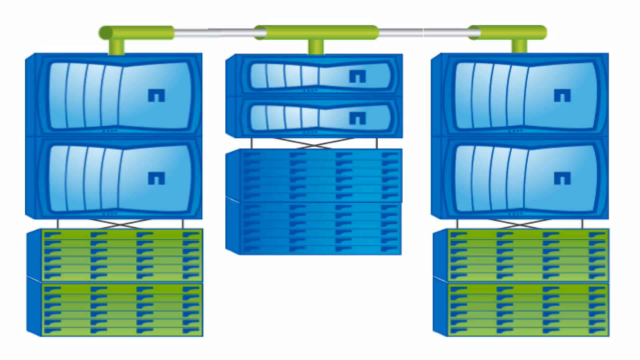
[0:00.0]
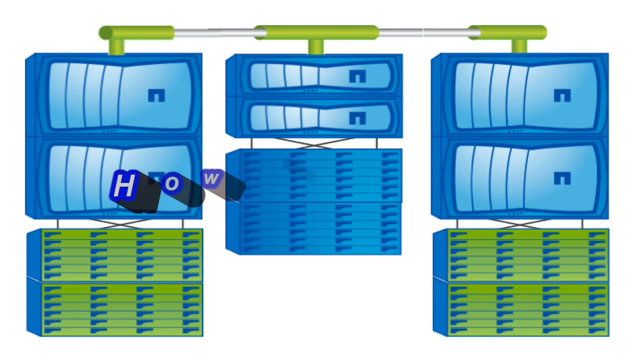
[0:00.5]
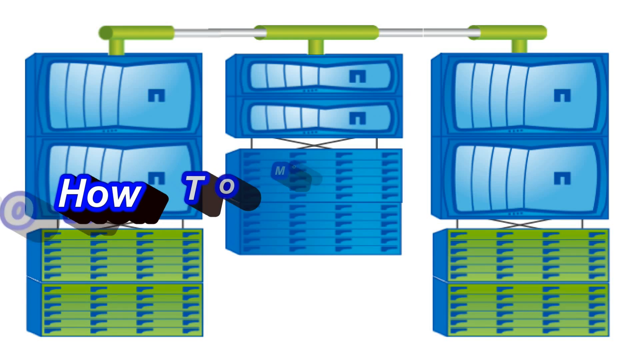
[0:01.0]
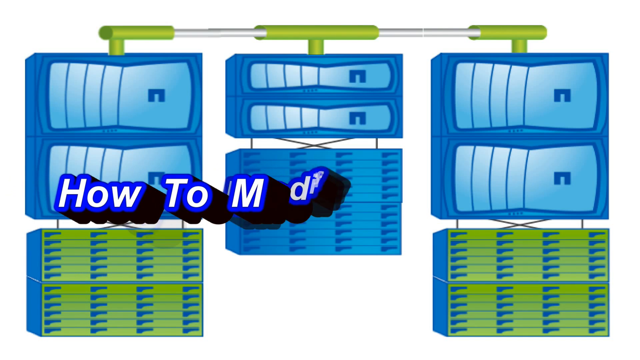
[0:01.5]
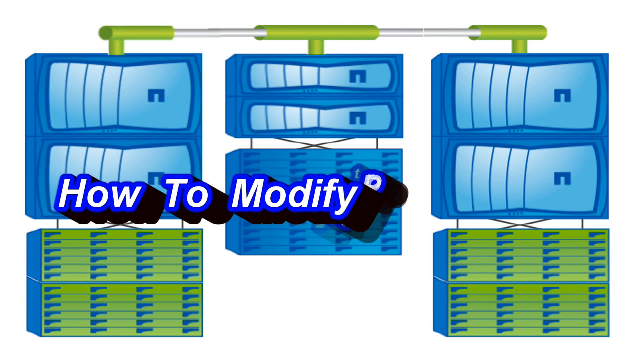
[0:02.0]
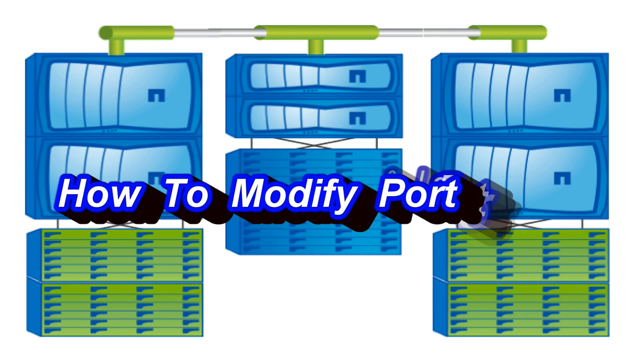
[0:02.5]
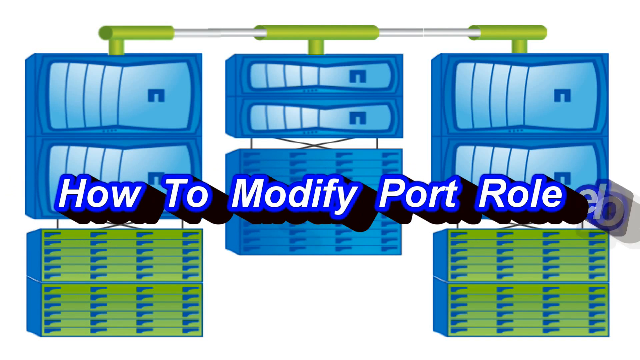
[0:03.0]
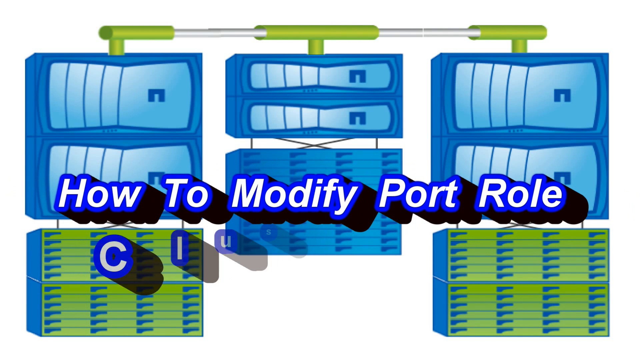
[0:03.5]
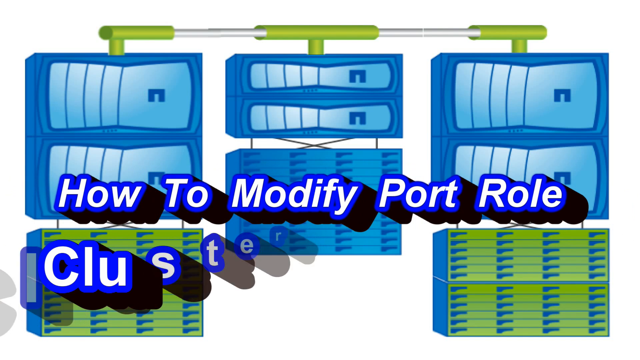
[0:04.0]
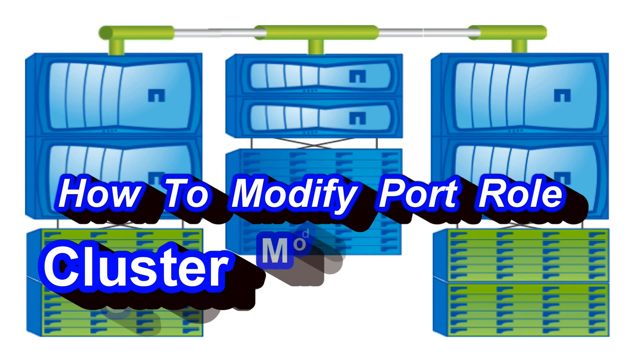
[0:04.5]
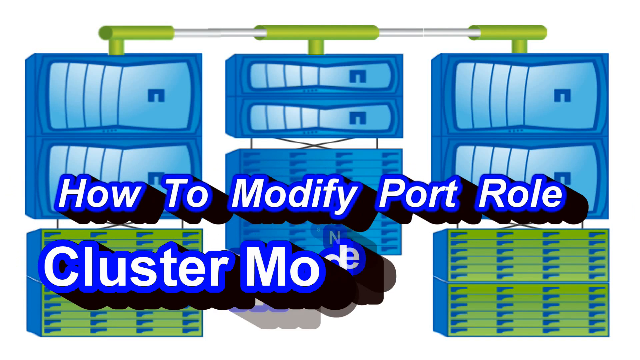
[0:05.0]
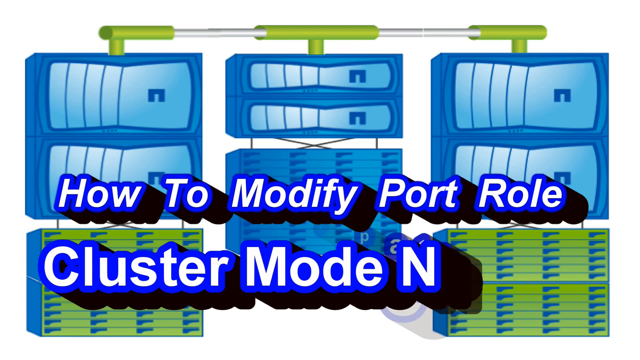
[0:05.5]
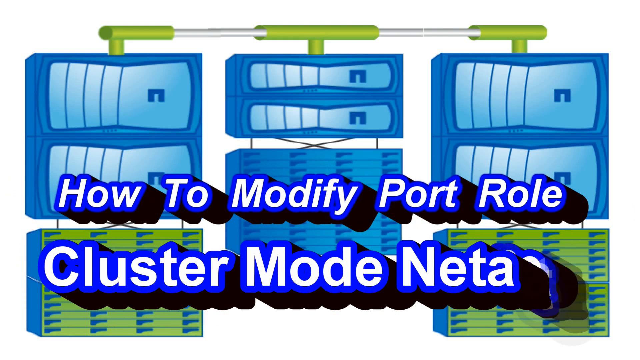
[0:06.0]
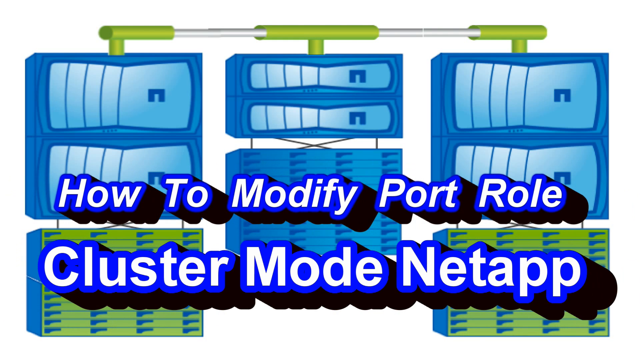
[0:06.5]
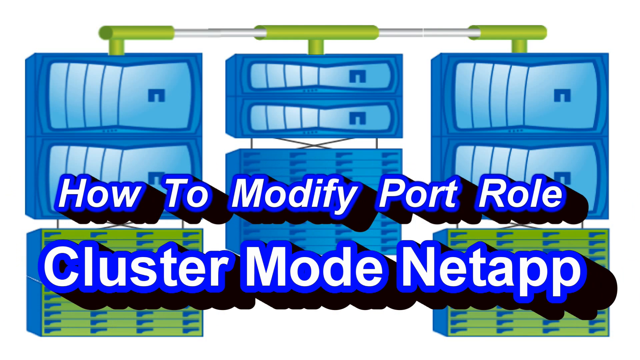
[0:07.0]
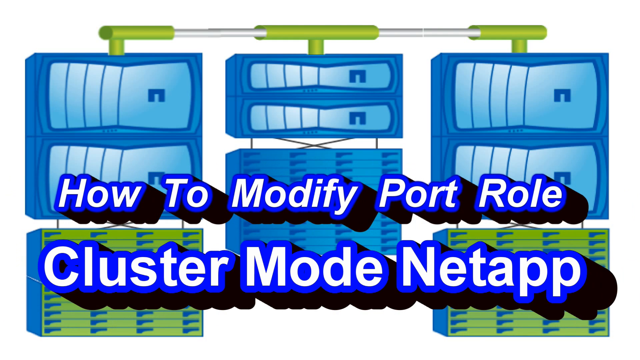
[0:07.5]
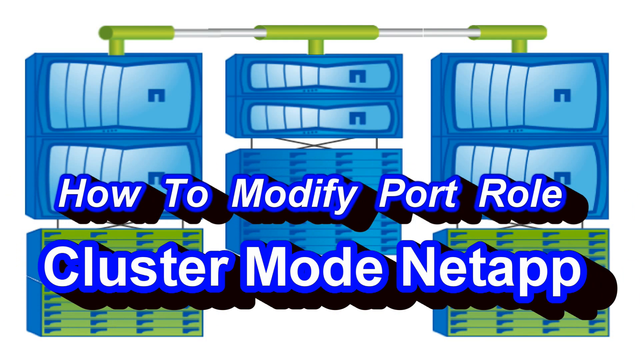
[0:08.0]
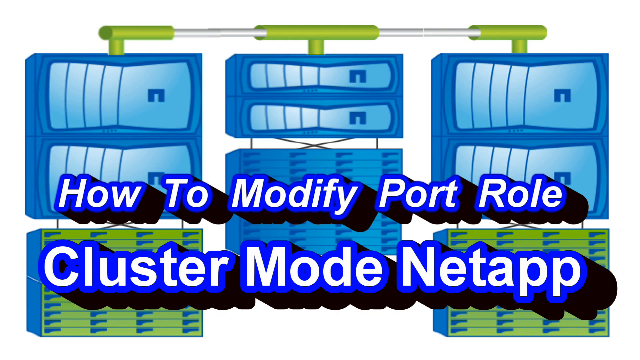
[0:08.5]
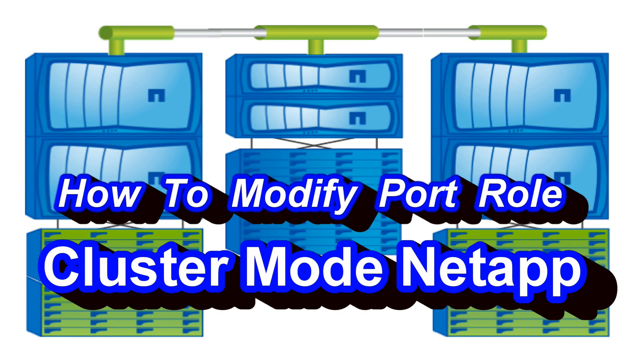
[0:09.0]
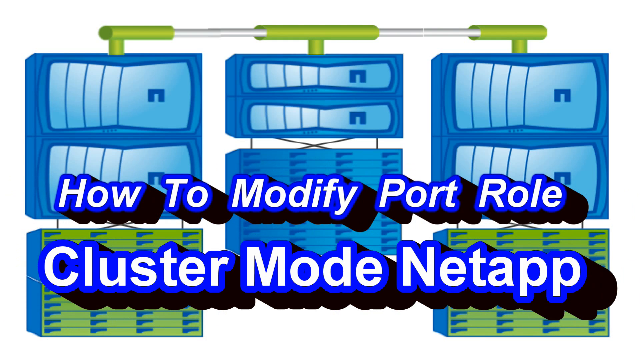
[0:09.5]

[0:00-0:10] A graphical diagram on a white background shows three connected columns of what appear to be computers and servers, receiving signal via connected wiring or a pipeline at the top that links to each column. The middle column is not the same height as the others; it has a smaller footprint of computers than the flanking left and right columns. Text emerges from the middle of the screen reading "how to modify port role, cluster mode, net map" in white letters with a blue stroke outline and a heavy, exaggerated black drop shadow that extends in depth. The text coming on screen repeats the same sequence over and over.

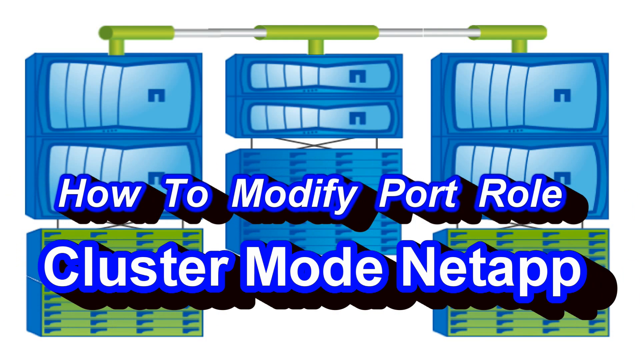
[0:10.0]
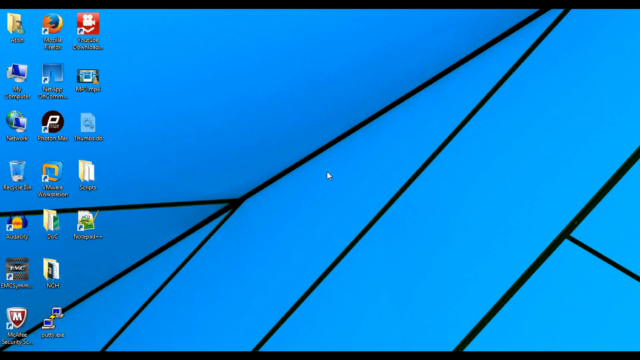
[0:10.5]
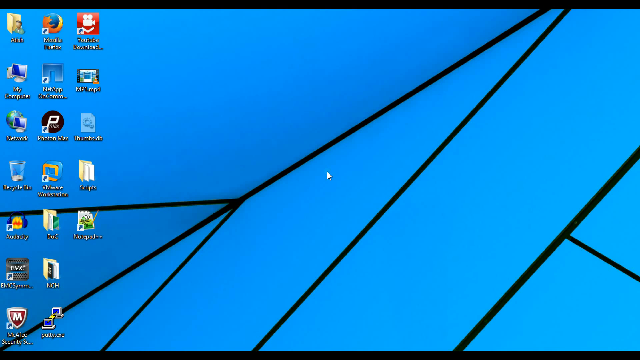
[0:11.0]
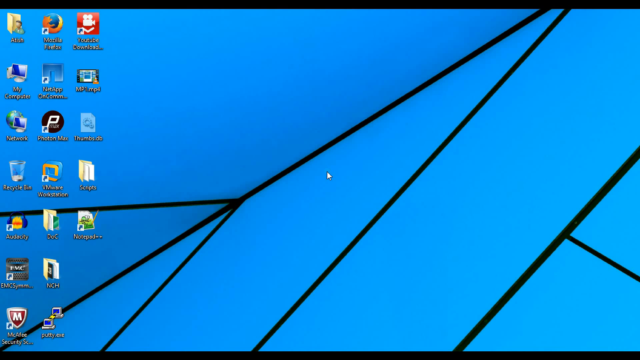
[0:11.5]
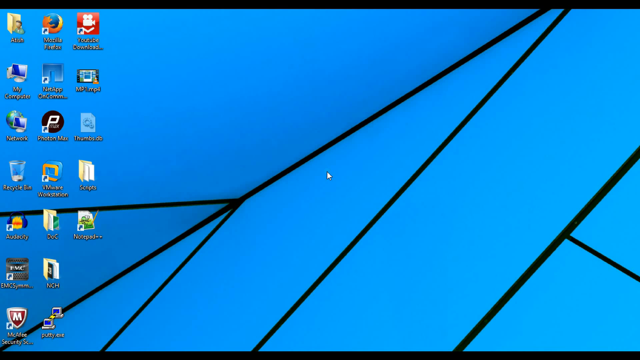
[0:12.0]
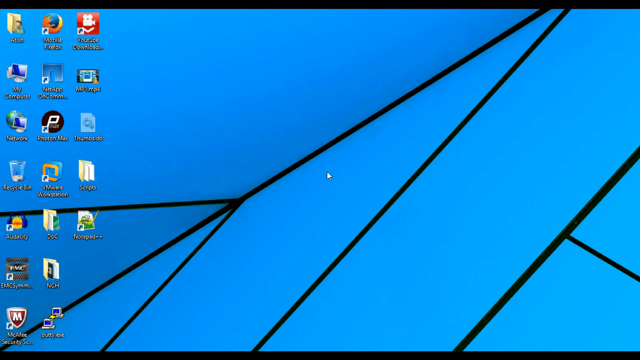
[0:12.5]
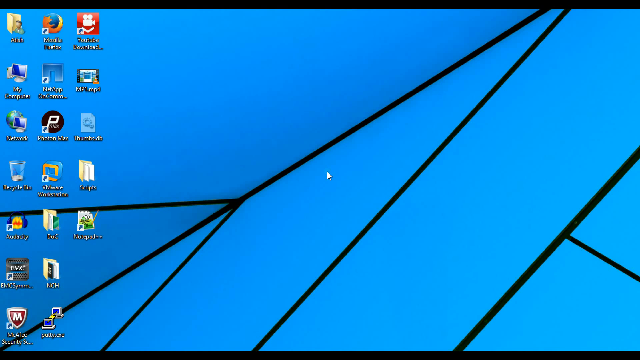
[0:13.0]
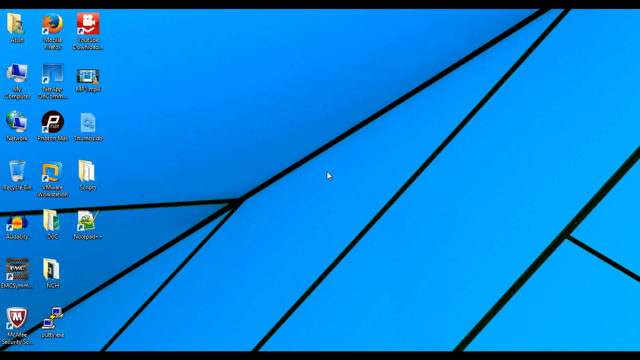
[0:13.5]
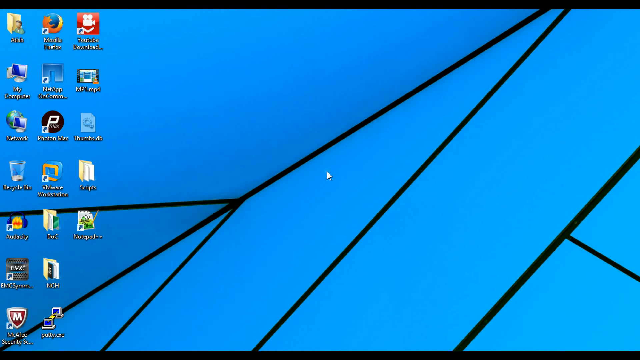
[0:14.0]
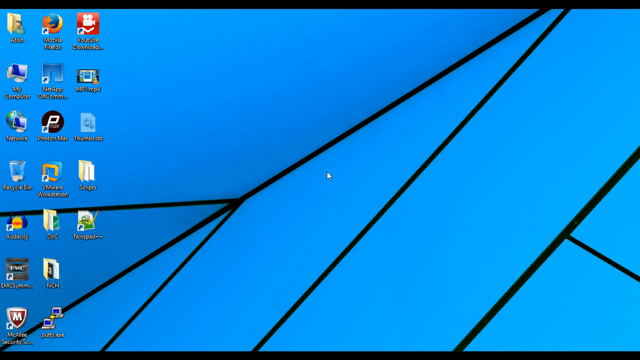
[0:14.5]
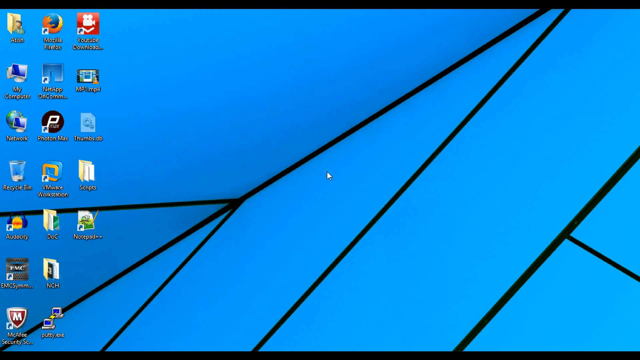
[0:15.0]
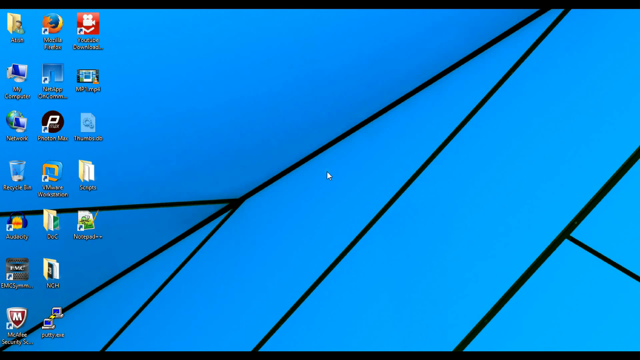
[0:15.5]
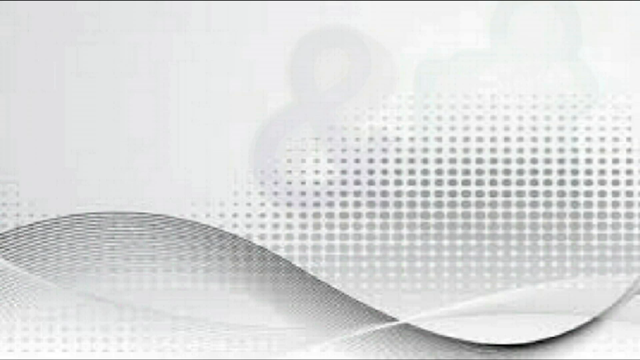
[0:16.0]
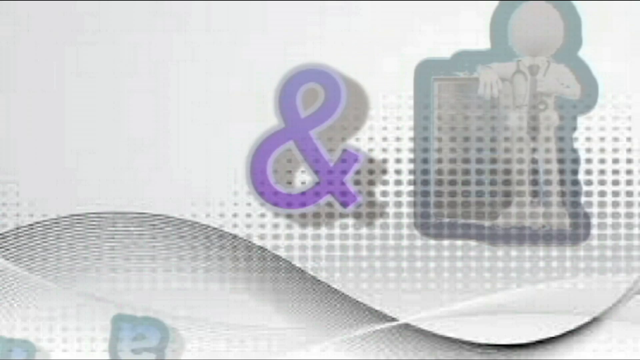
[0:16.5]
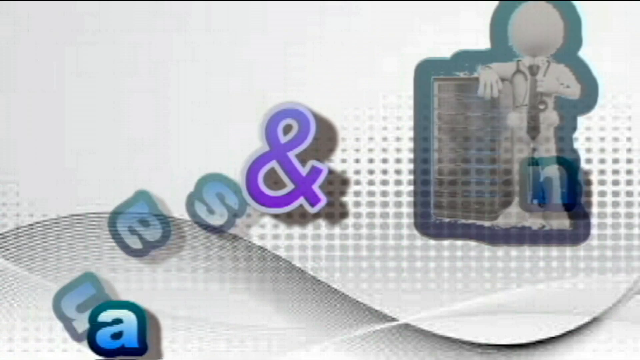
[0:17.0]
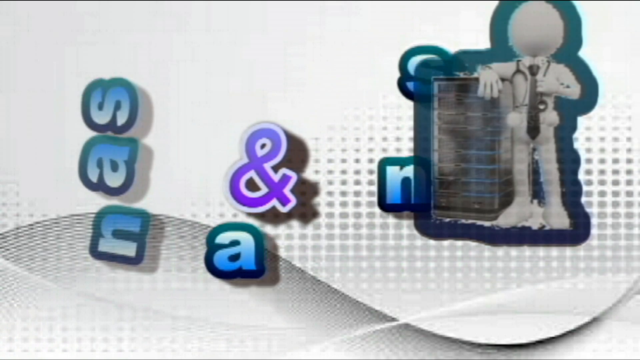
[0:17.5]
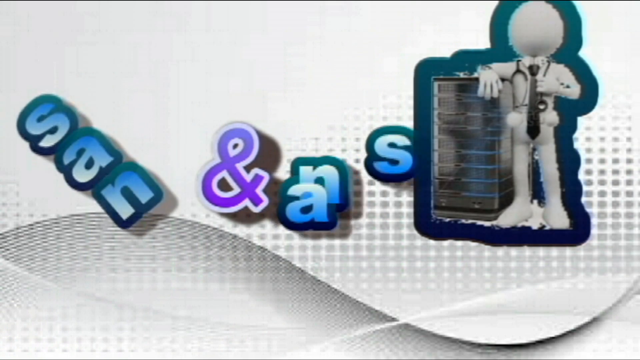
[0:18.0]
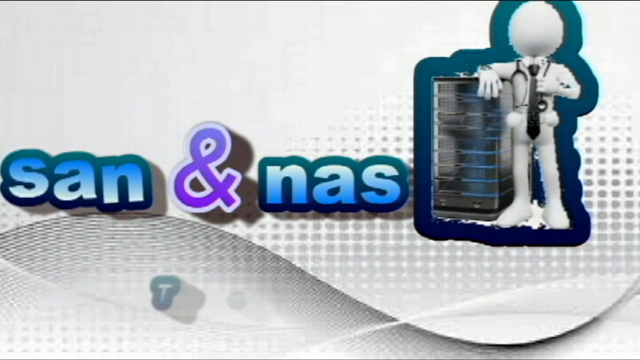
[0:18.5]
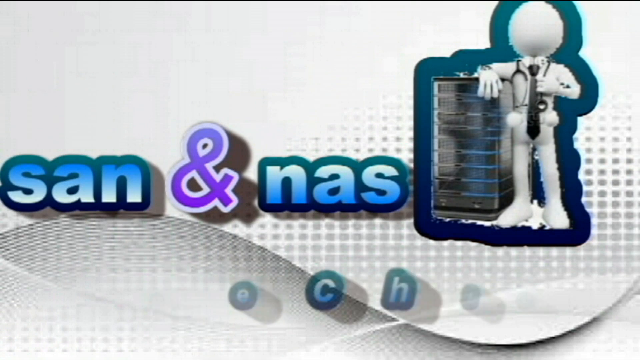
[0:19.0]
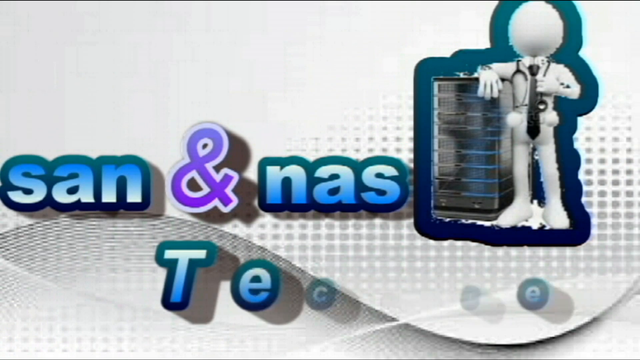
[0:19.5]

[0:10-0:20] The graphic leaves full-screen mode and reveals the desktop of what appears to be a Windows operating system. Several thumbnail icons showing various applications are on the left-hand side of the screen. The desktop background is blue, apparently in two different shades, separated by diagonal black lines in various shapes running across it. As the desktop is revealed, a new graphic appears to come on screen: a cartoonish, unidentifiable man like a stick figure with a round head and cartoon glove hands, wearing a tie and a stethoscope around his neck, with no other facial features. He appears to be resting his right arm on top of a box of servers. Scattered words come together to form the phrase "sand and mass", and "techie" appears at the bottom, though the text moves so fast it is hard to see.